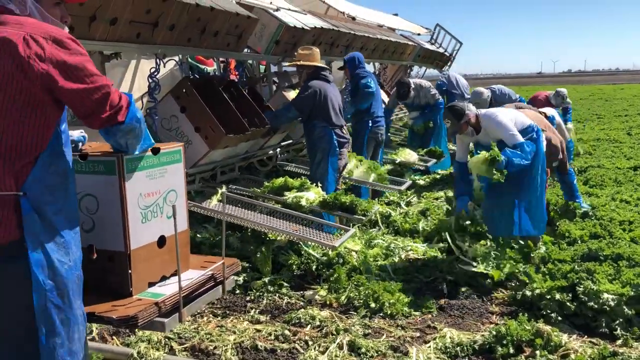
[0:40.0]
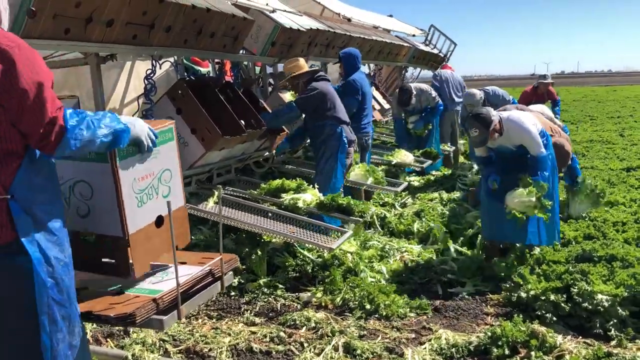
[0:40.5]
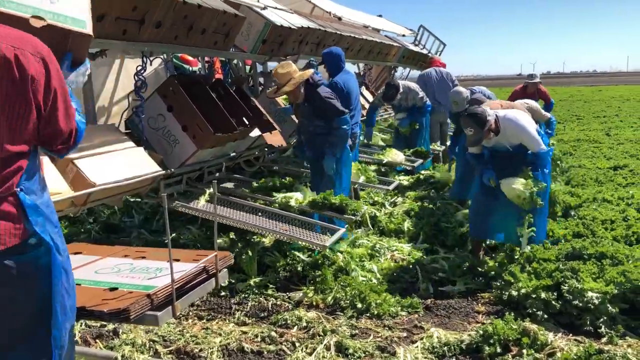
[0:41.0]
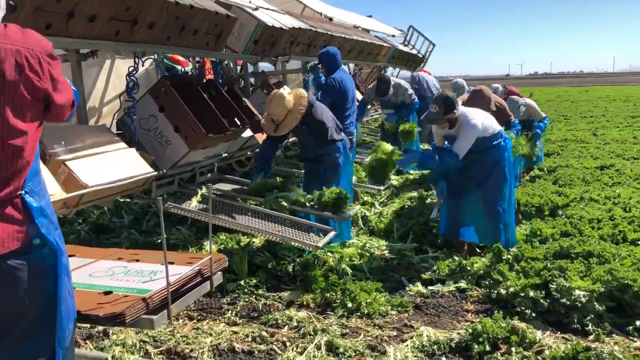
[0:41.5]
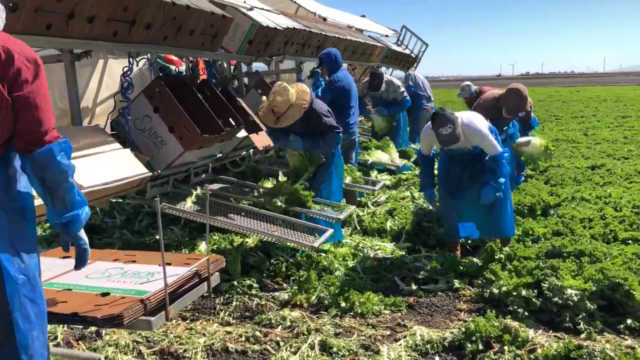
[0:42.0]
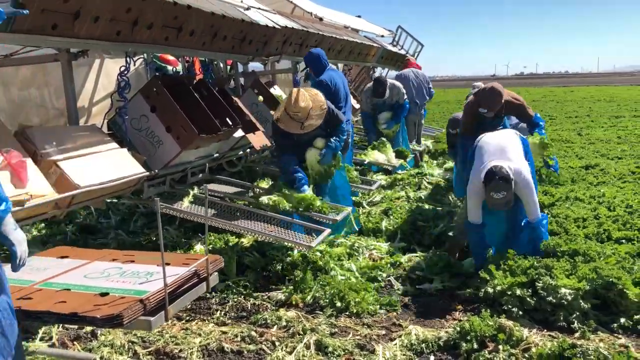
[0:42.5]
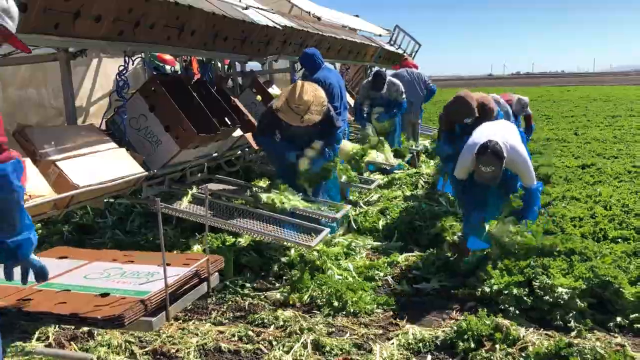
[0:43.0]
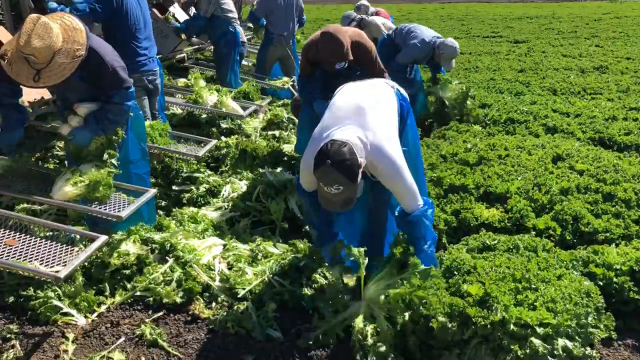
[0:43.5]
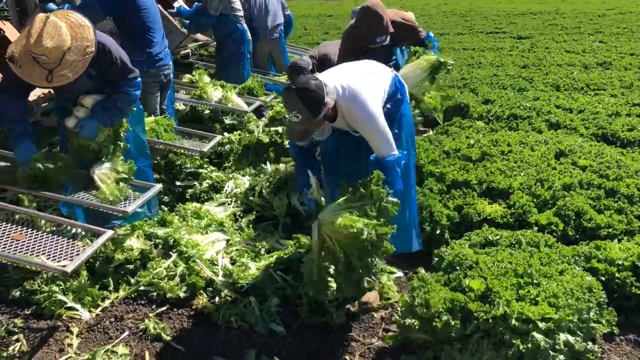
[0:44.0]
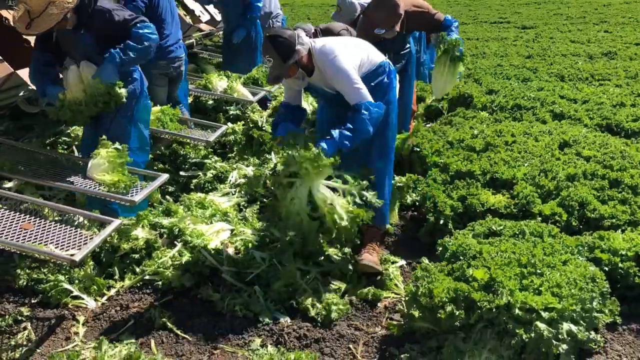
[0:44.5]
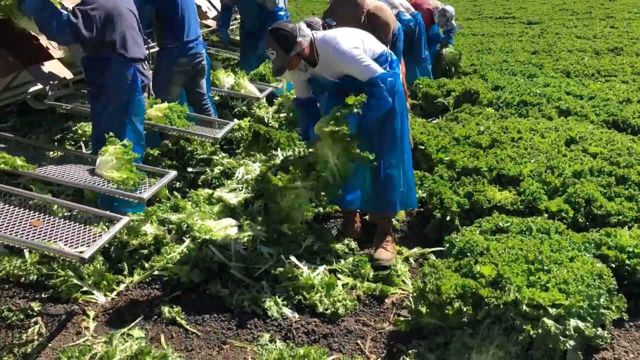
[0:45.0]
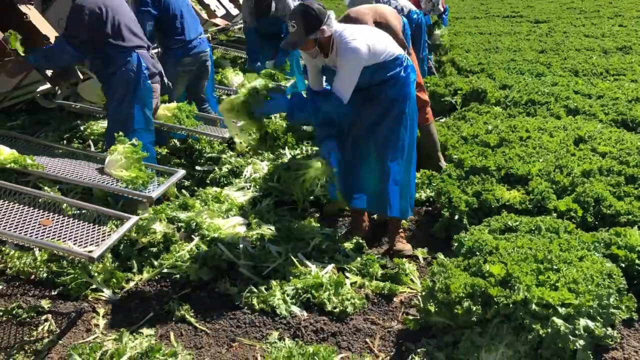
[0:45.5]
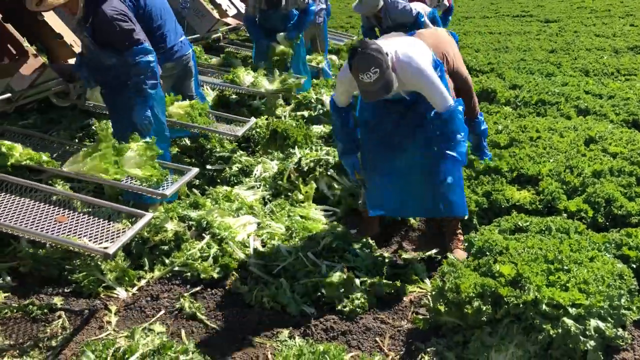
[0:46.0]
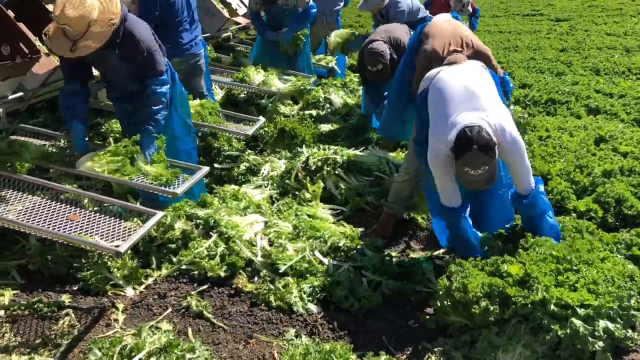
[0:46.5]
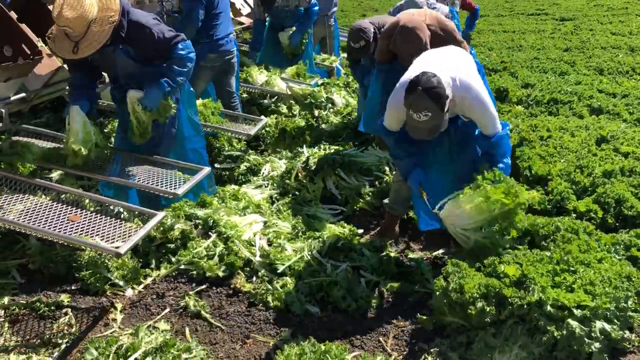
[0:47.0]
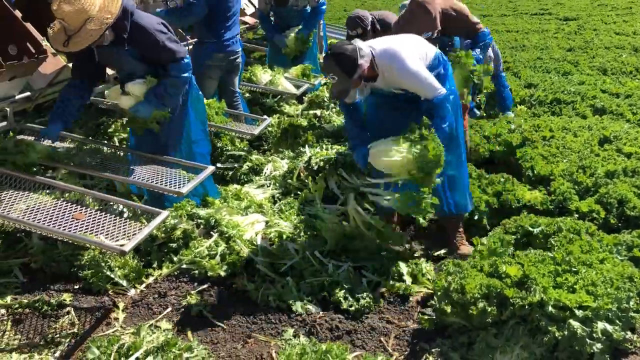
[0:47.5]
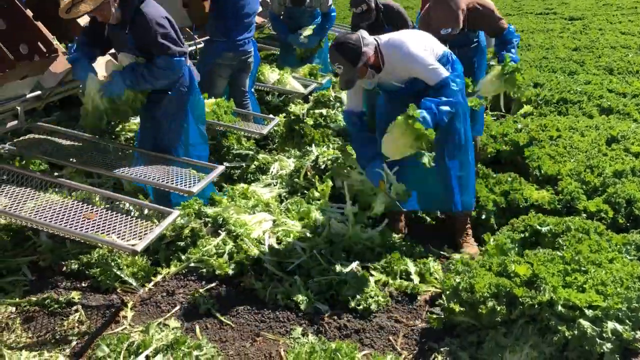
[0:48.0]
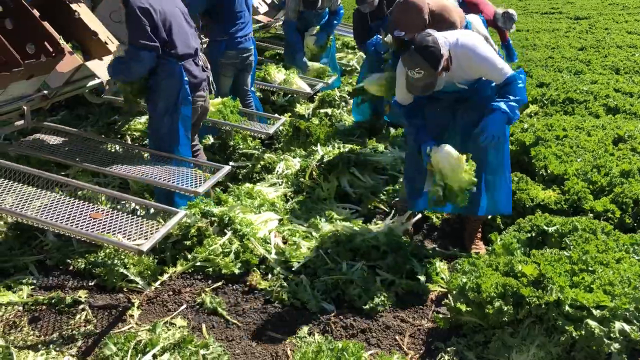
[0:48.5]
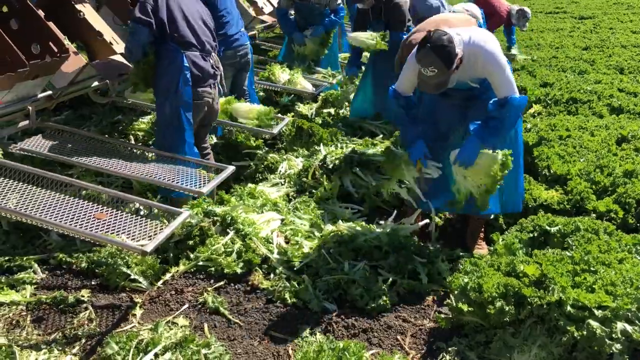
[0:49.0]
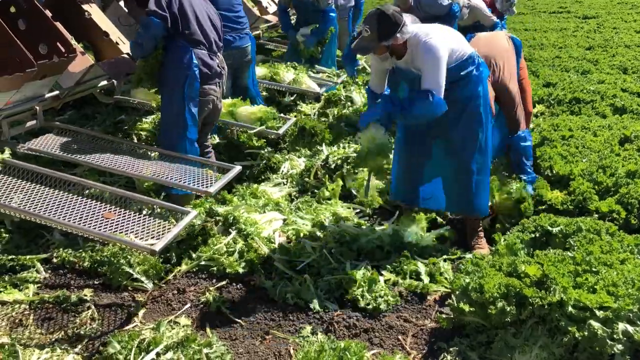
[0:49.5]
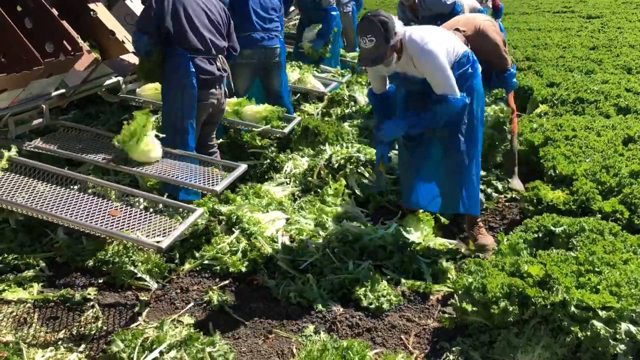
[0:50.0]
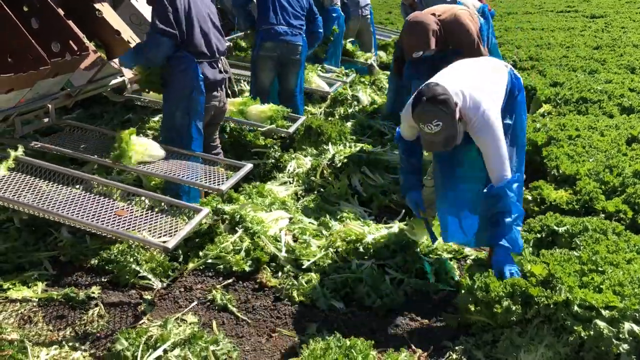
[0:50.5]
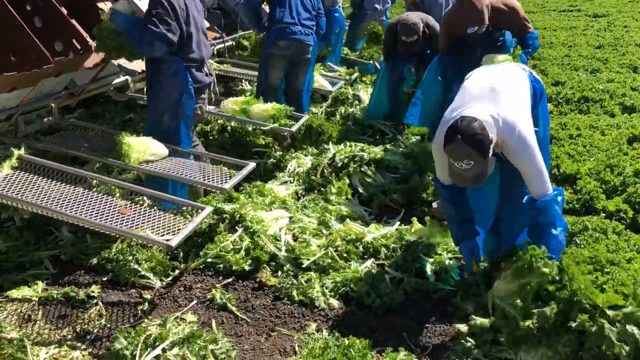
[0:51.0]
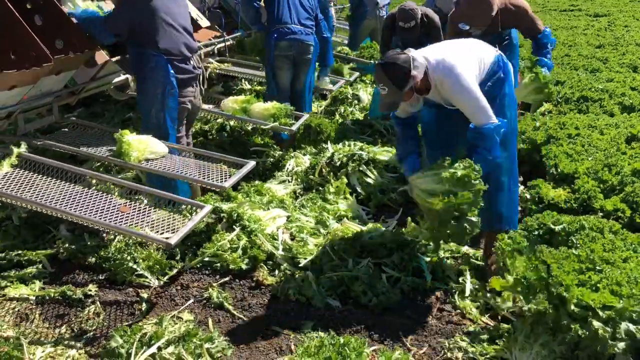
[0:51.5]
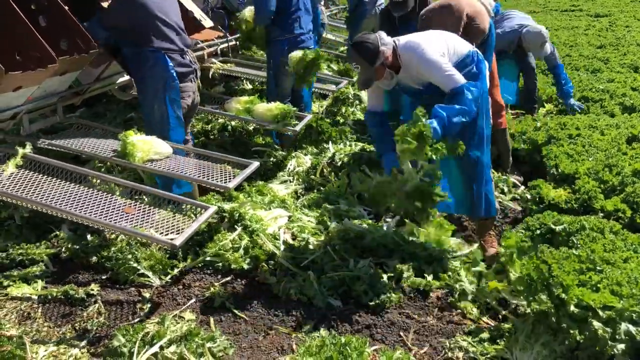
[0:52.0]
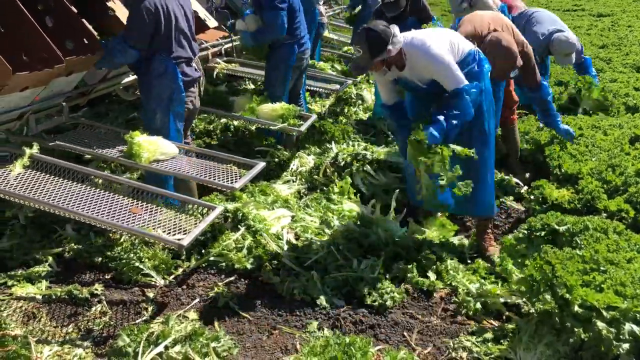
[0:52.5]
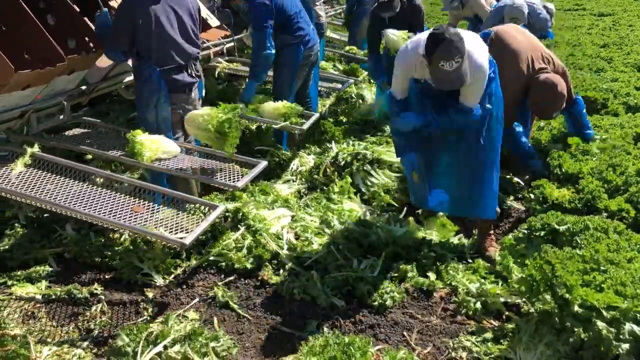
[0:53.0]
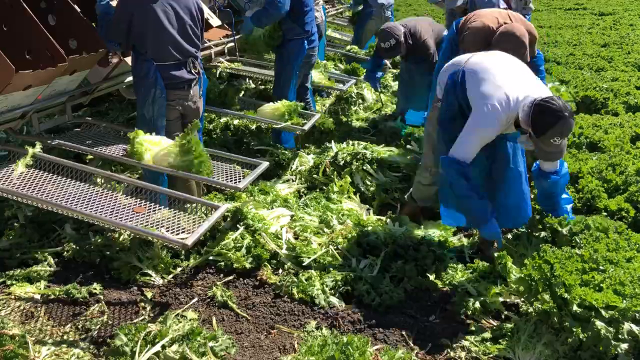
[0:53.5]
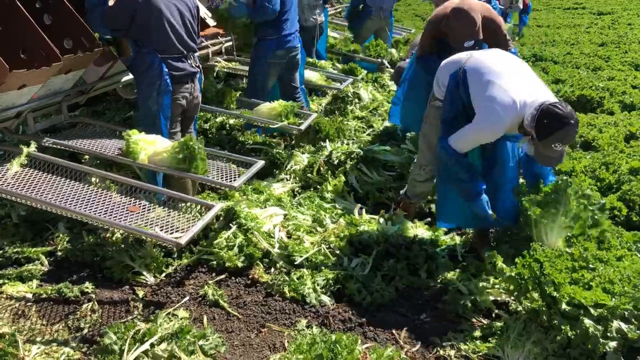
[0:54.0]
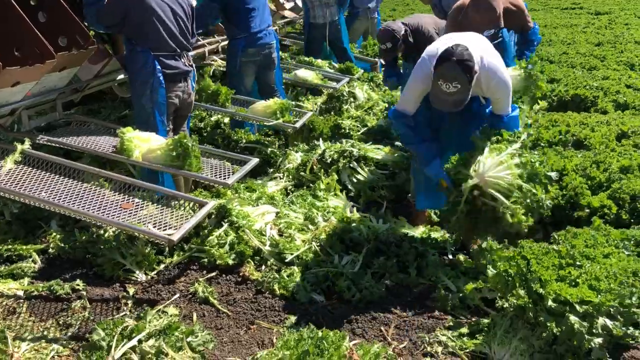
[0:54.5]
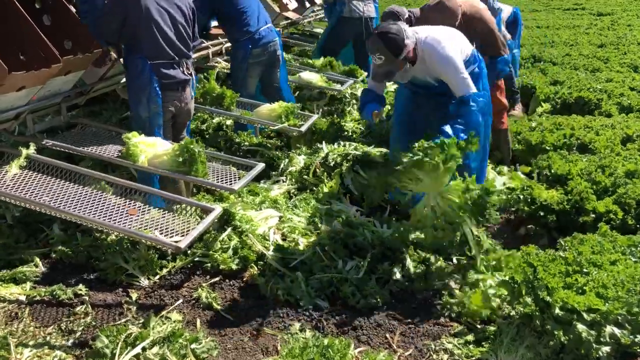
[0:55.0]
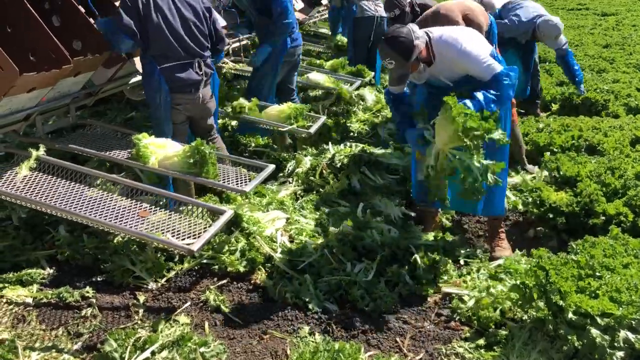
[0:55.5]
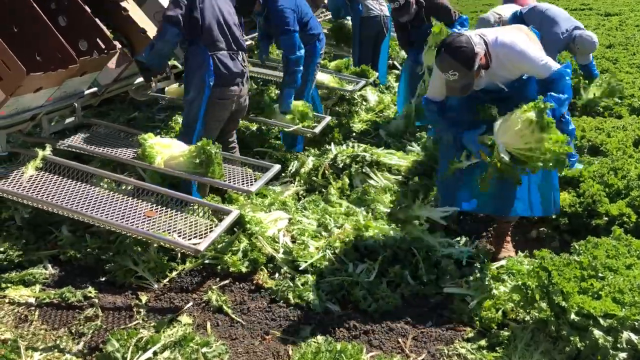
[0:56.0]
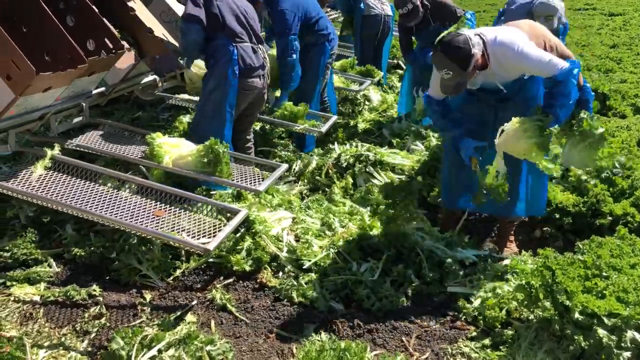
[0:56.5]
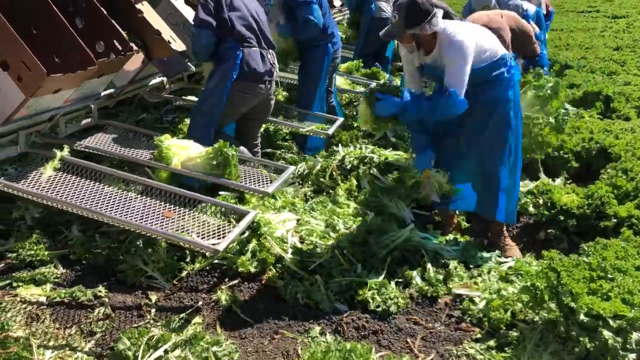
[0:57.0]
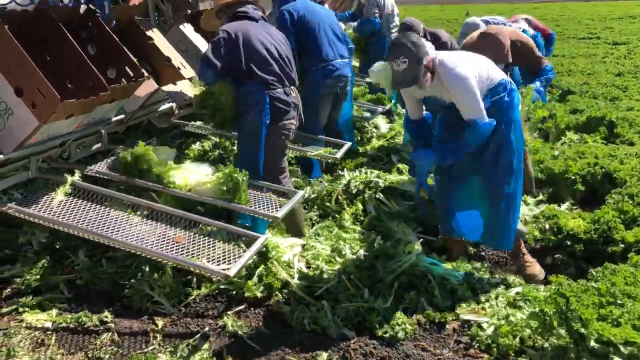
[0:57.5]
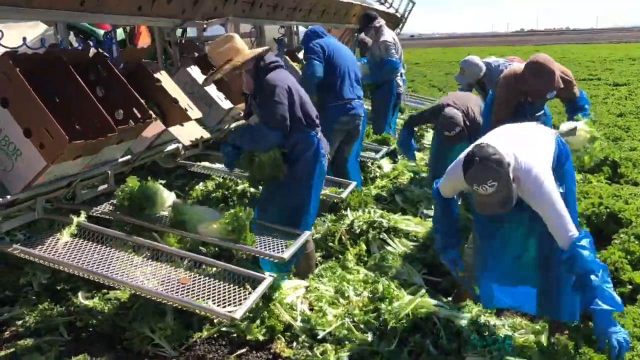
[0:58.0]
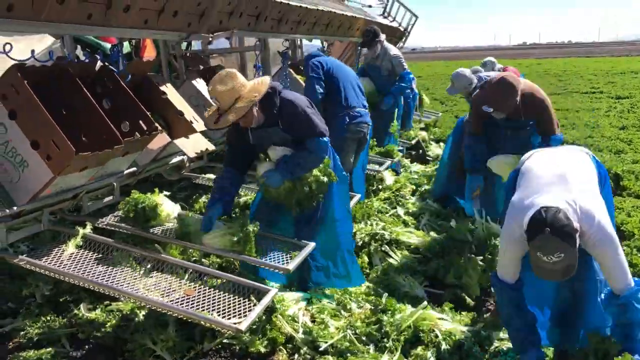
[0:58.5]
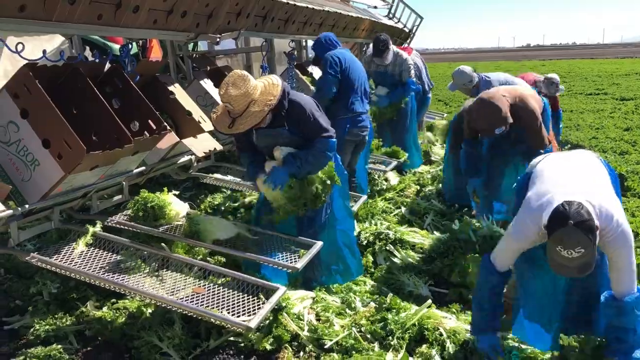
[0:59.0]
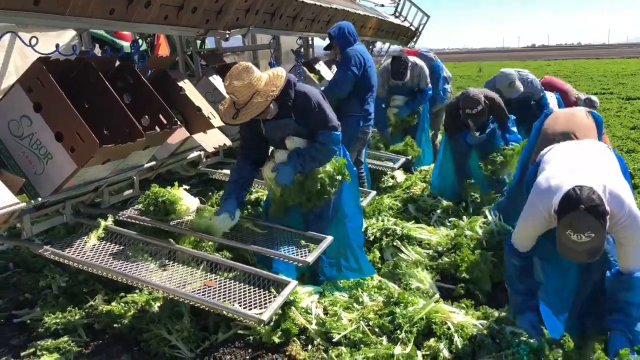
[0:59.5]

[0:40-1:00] After the workers in the field, there is a cut to a closer view of them. A worker cuts a bundle of plants from the field and then appears to split off part of it; one part drops to the ground while the other part is held in the other hand and tossed onto the net in front of the boxes. This worker appears to be wearing large plastic gloves and a plastic apron. He picks up another bunch of plants, throws it on, uses his hands to pull off part, and throws the other part onto the conveyor belt. The plants appear to be some sort of vegetable, with long greenish-white stalks and bushy green leaves at the end. The workers on the right side throw the plants quickly onto the nets, while other workers pick the plants up from the nets and throw them into the boxes above. The camera then moves over to the left to focus more on the workers next to the boxes.